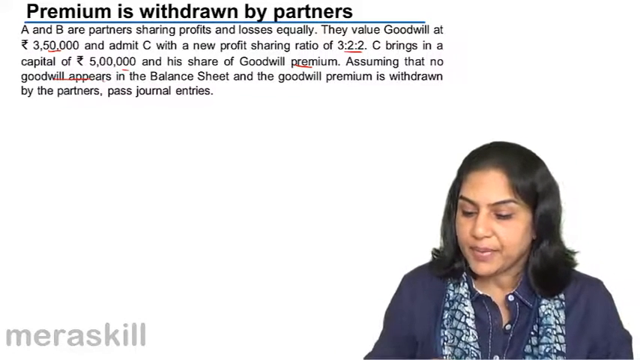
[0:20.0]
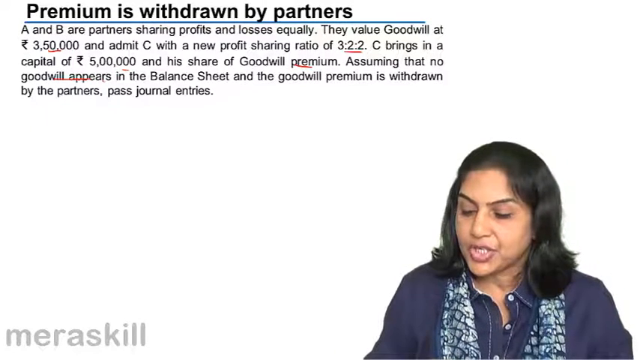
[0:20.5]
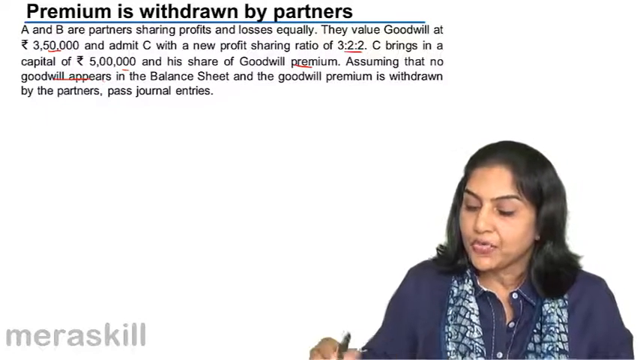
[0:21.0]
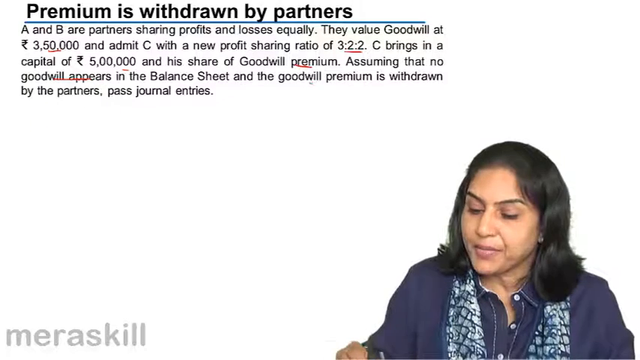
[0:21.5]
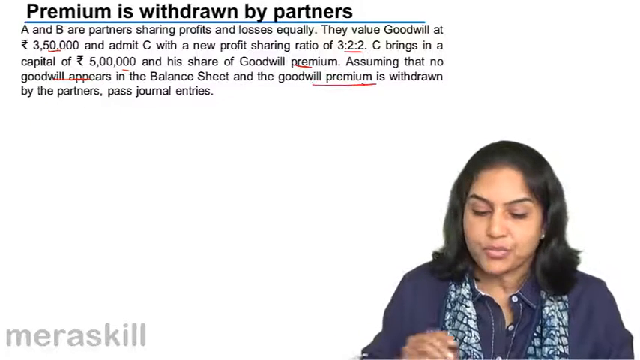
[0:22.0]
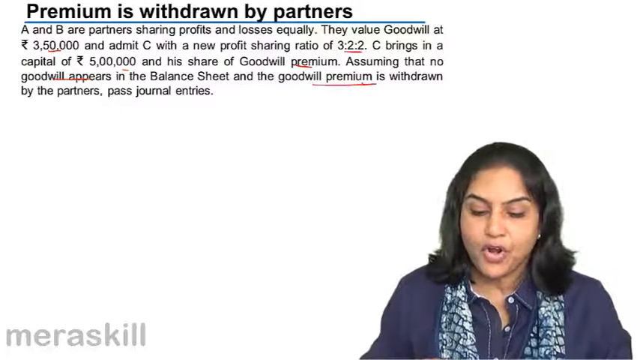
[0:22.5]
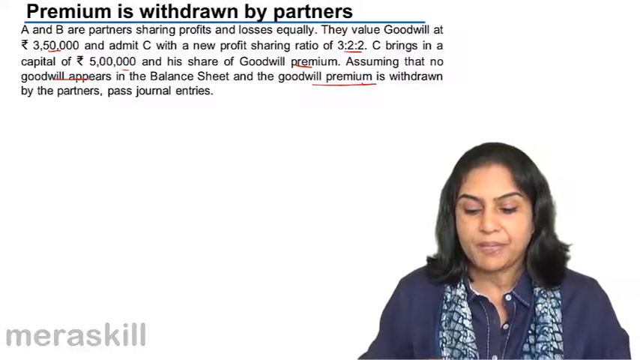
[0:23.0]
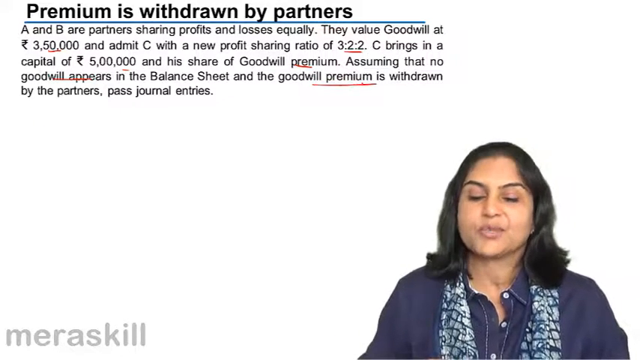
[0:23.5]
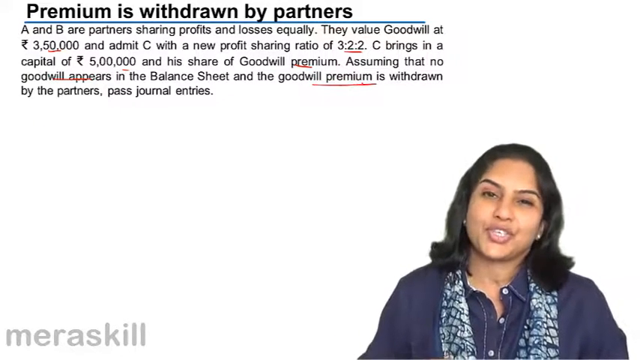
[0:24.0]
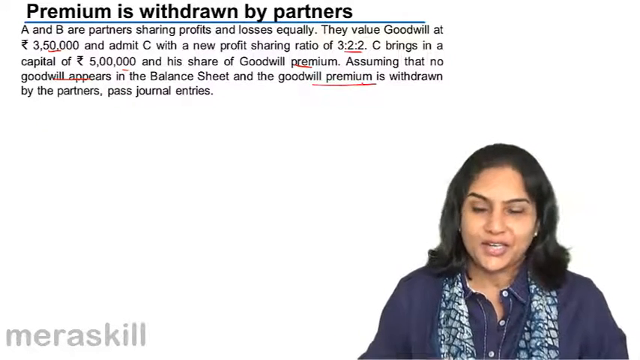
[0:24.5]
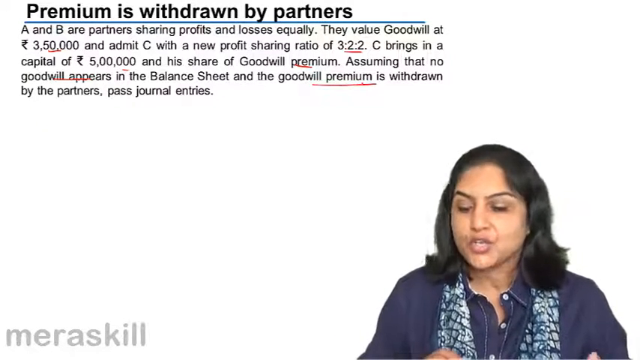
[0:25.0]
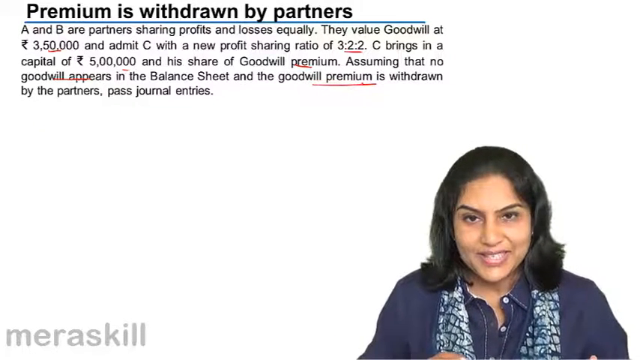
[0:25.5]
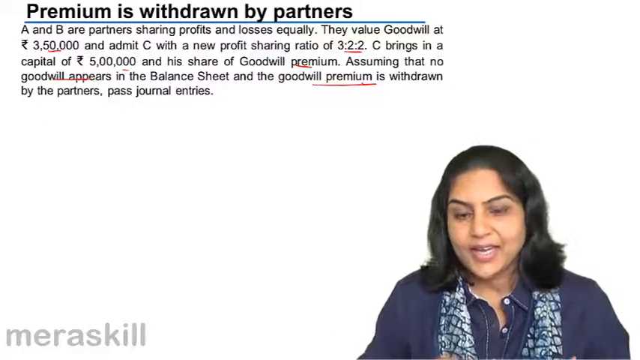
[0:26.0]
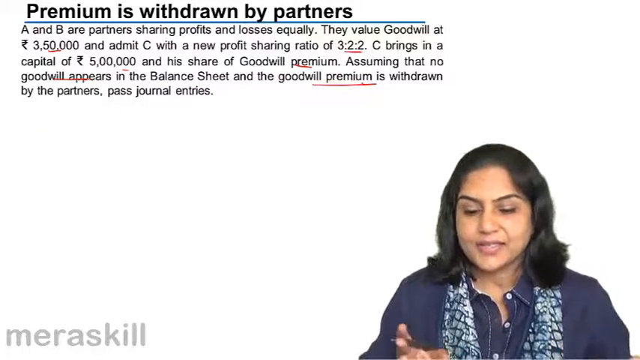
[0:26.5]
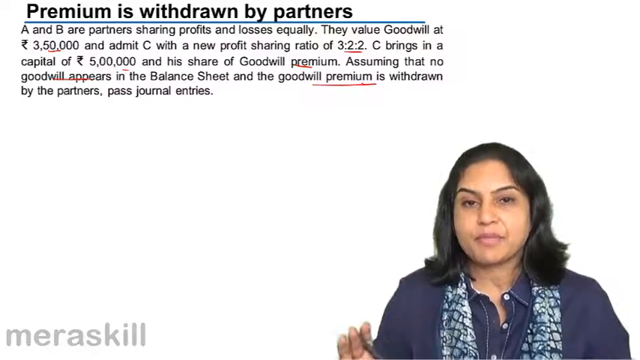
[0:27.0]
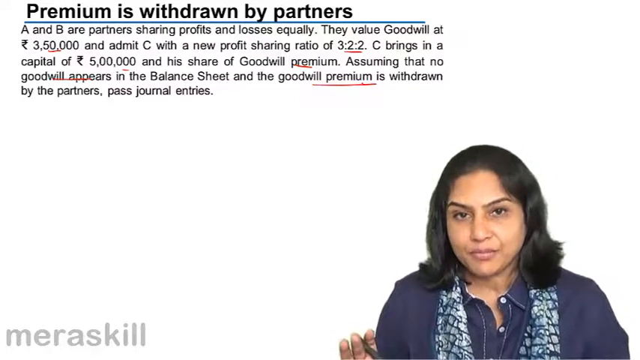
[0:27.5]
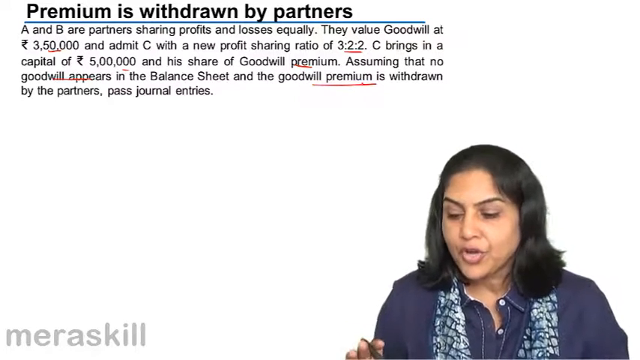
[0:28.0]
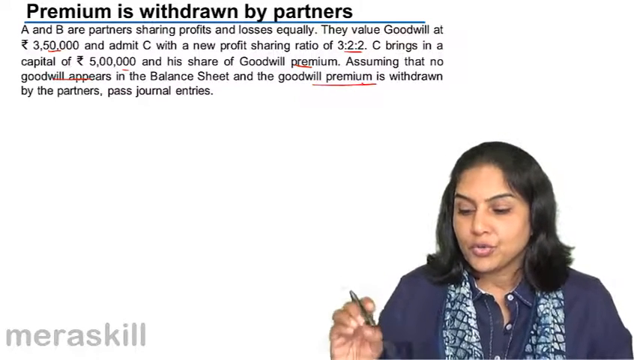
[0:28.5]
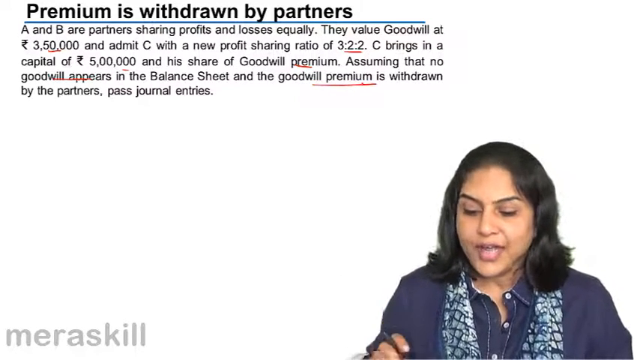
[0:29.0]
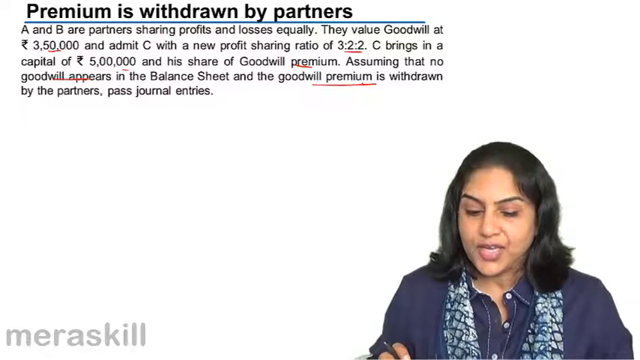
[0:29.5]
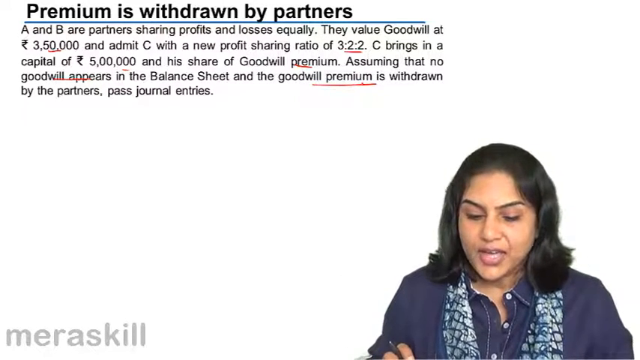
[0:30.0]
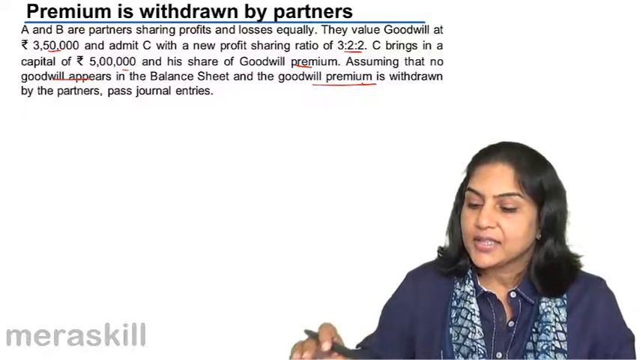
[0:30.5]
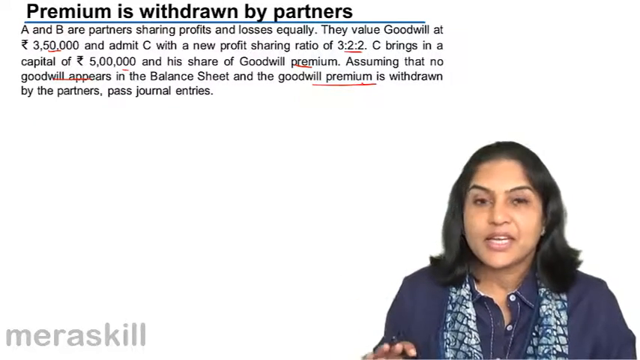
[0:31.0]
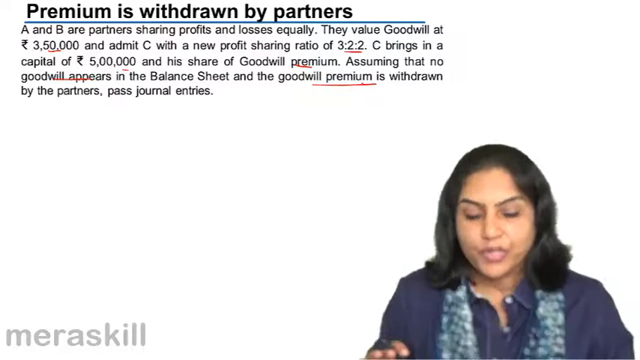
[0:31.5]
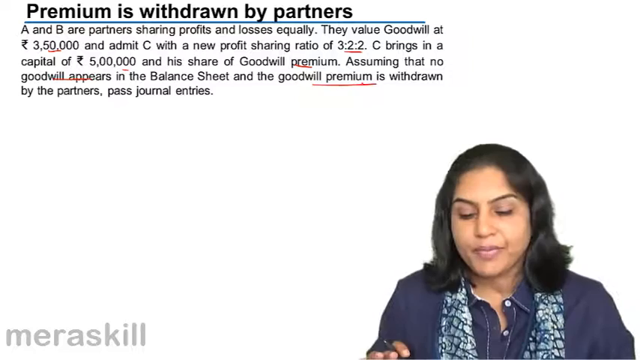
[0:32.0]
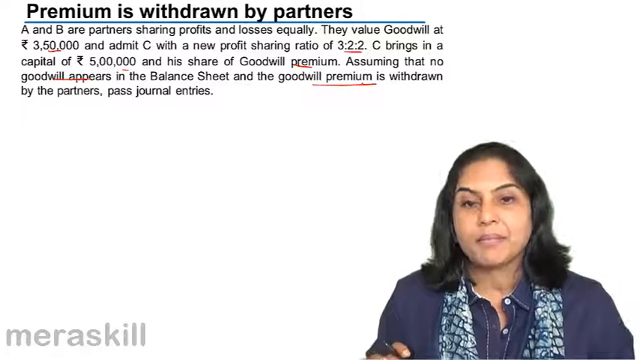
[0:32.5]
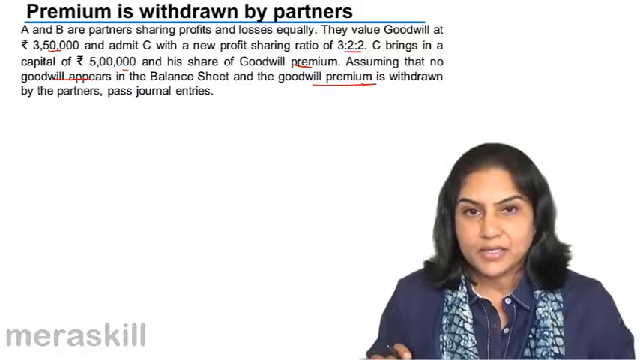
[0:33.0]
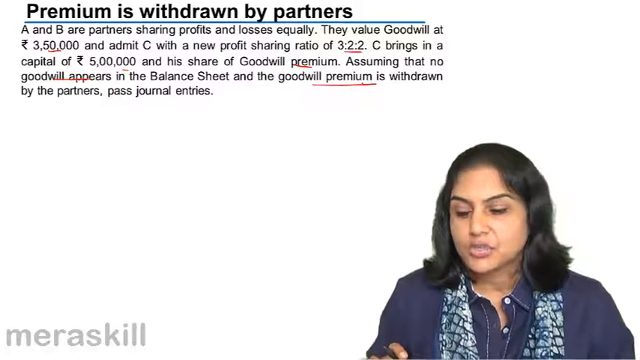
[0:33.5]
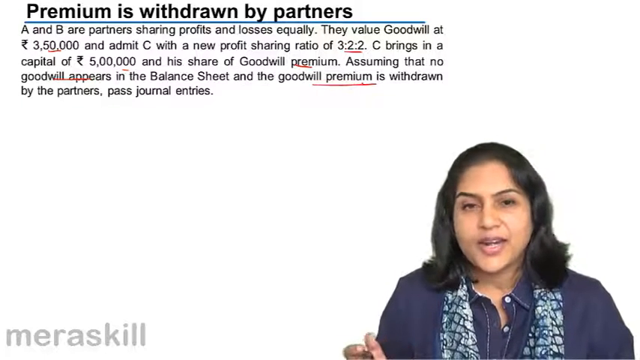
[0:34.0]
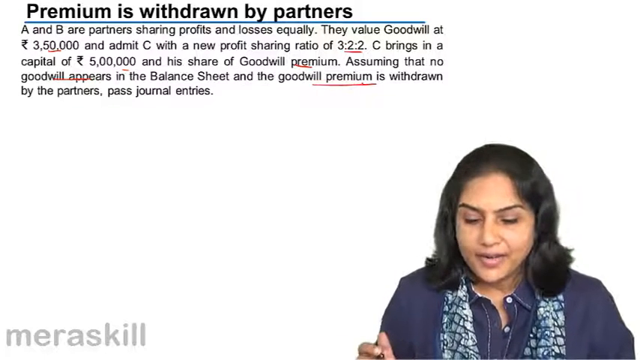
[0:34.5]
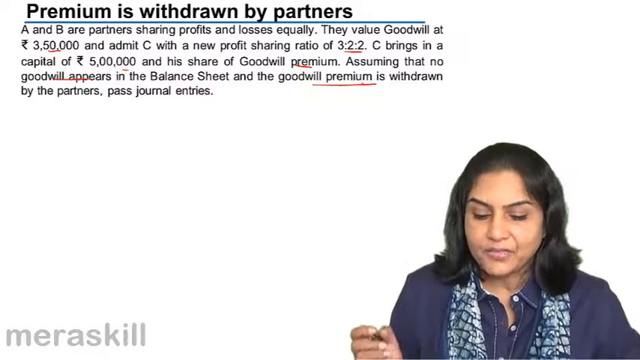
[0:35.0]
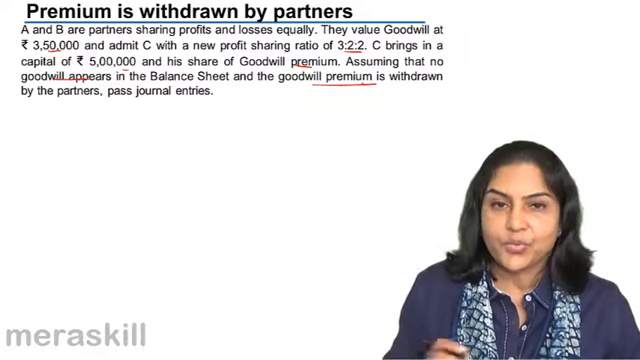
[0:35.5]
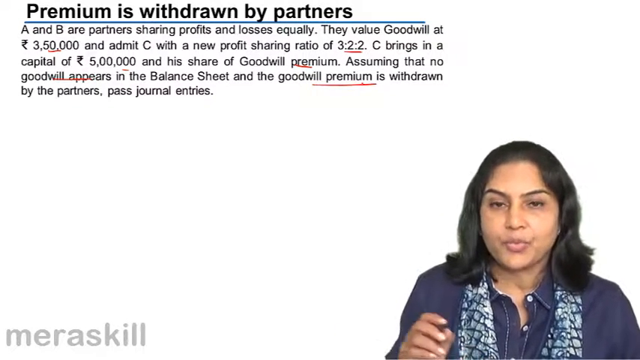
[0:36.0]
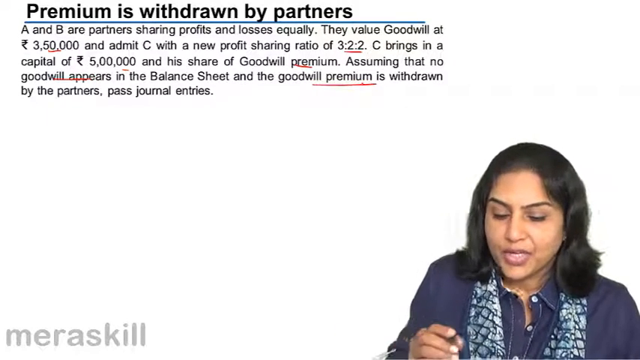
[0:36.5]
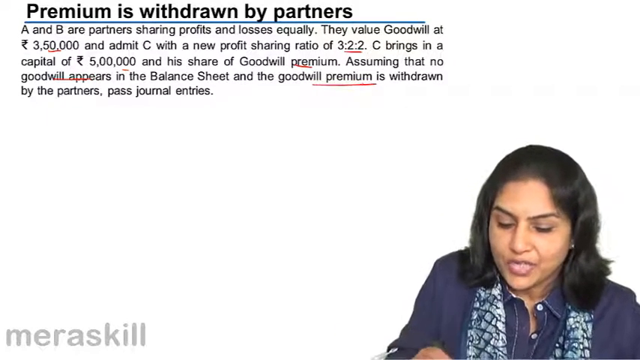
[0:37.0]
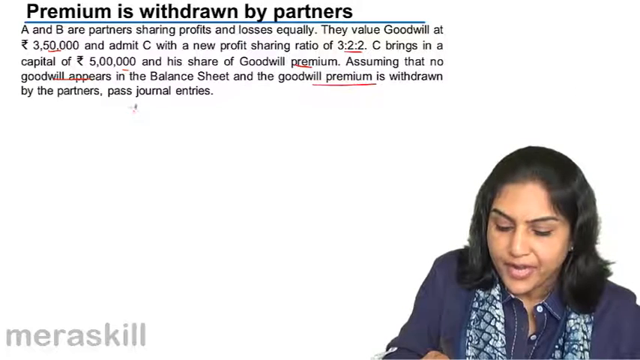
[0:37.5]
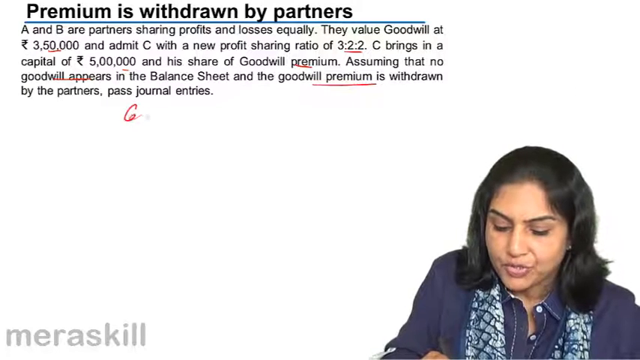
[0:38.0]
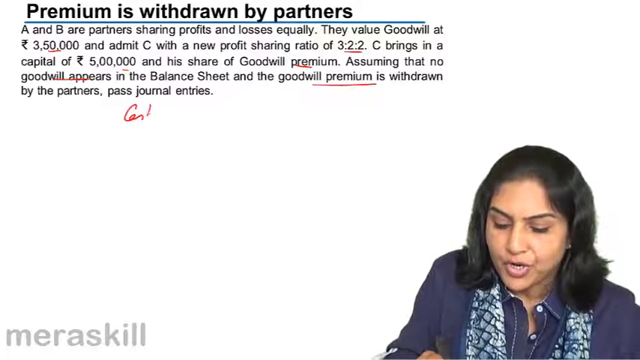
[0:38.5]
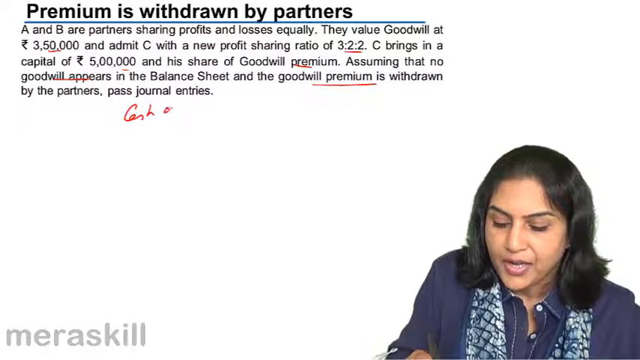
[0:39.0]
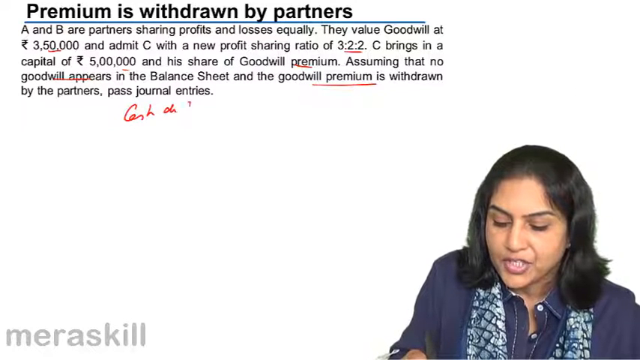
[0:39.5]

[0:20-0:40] The title "premium is withdrawn by partners" remains in the top left section of the scene. The woman is still looking down, speaking, reading something and writing as she speaks. She raises her right hand, writes something, then removes it from view and continues reading and looking down. She raises her head, looks directly into the camera, speaks and nods, then gestures her hands up and around in a semi-circle. She holds up her right hand with the pen between her middle and index fingers, bringing her index finger, thumb and middle finger together around the pen in a pointed gesture as if making a point while speaking. She continues to speak, moving the hand around randomly with the pen still in it, looks down, reads and speaks, then stops moving and writes something down again.